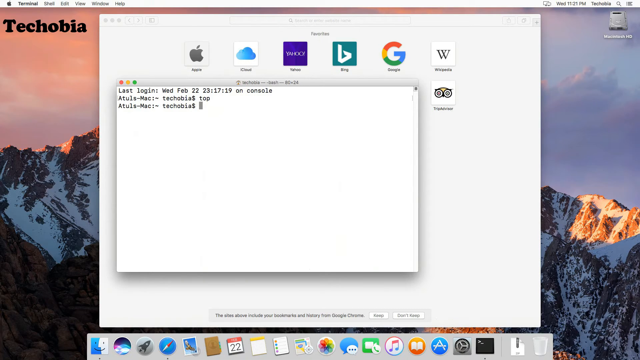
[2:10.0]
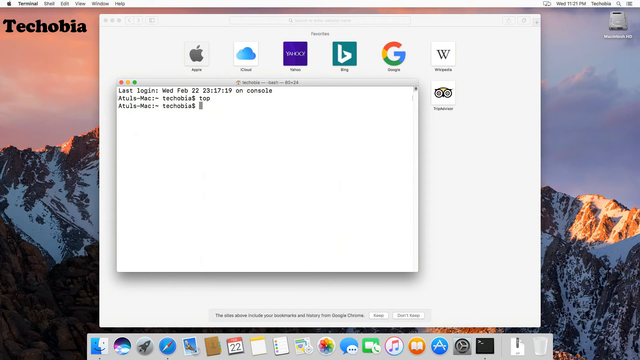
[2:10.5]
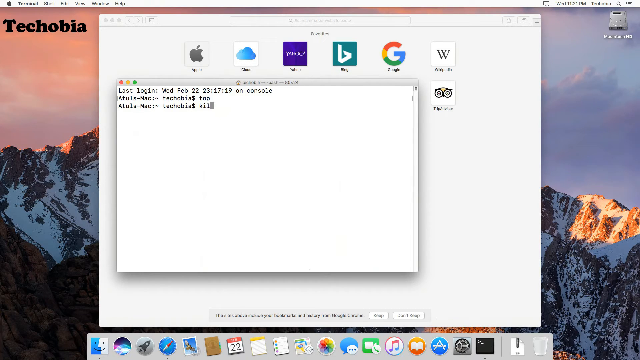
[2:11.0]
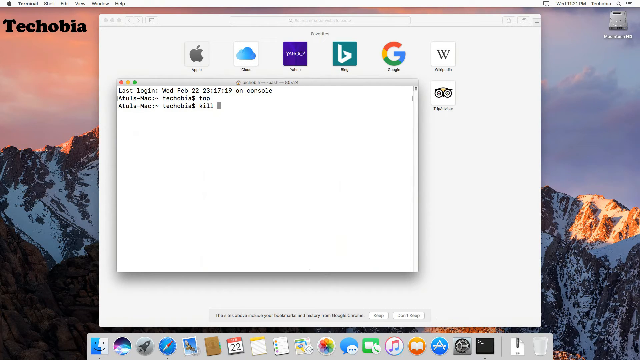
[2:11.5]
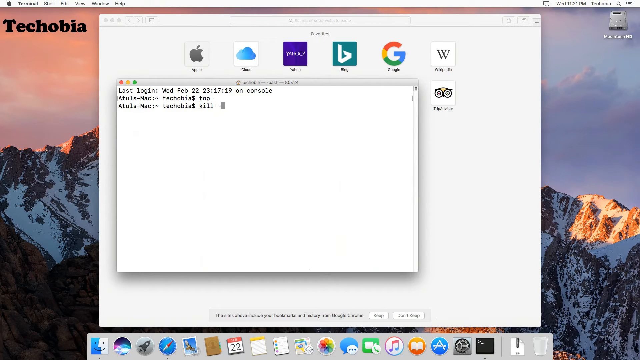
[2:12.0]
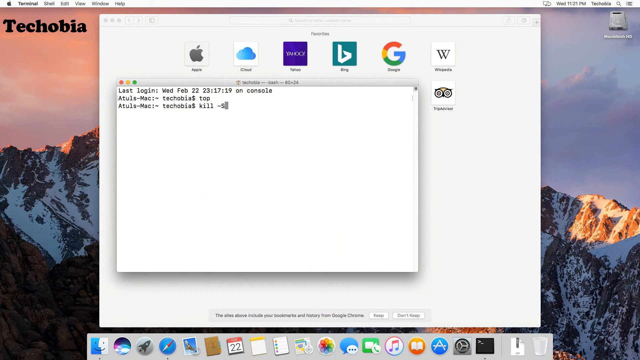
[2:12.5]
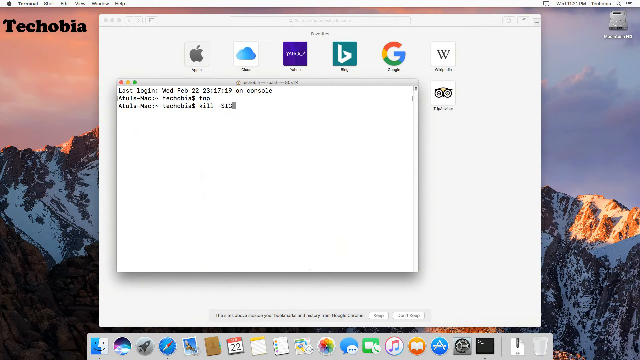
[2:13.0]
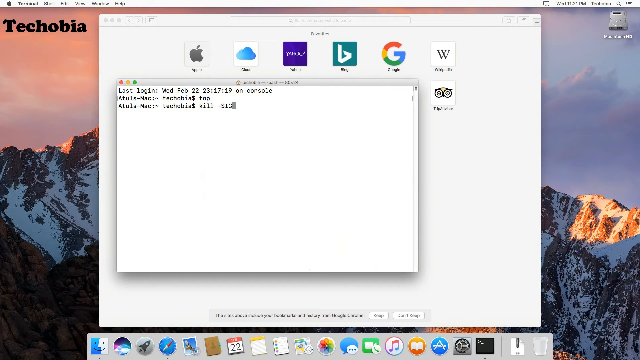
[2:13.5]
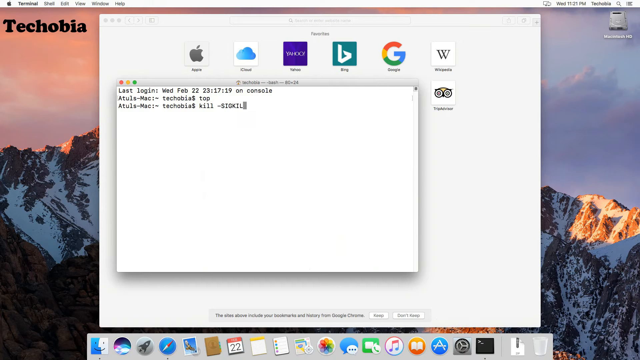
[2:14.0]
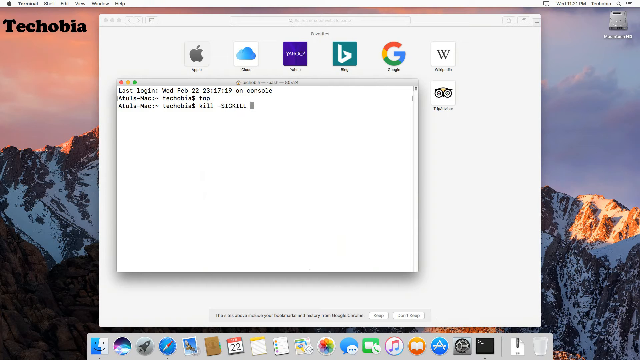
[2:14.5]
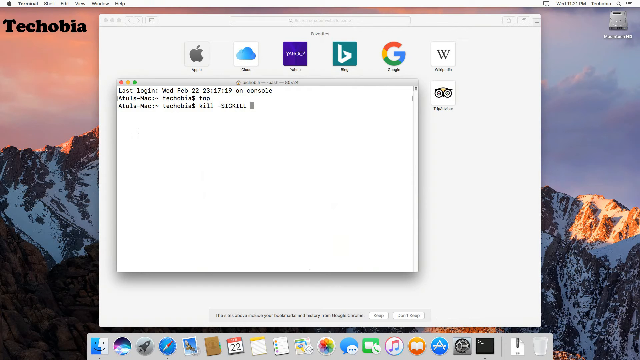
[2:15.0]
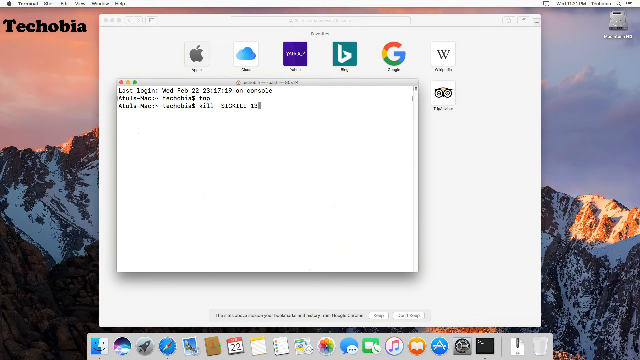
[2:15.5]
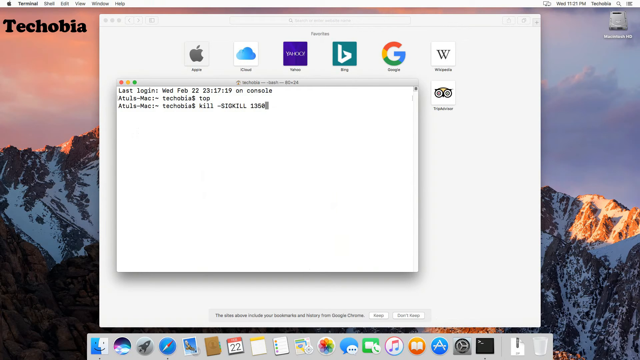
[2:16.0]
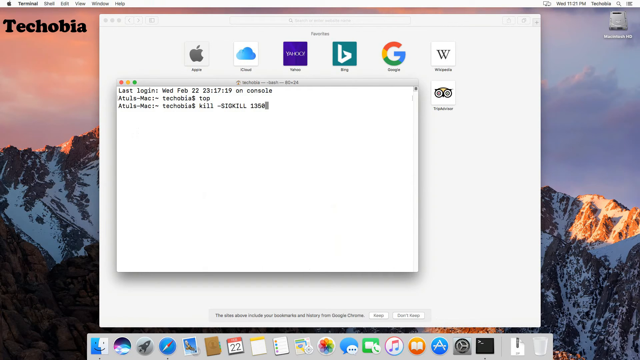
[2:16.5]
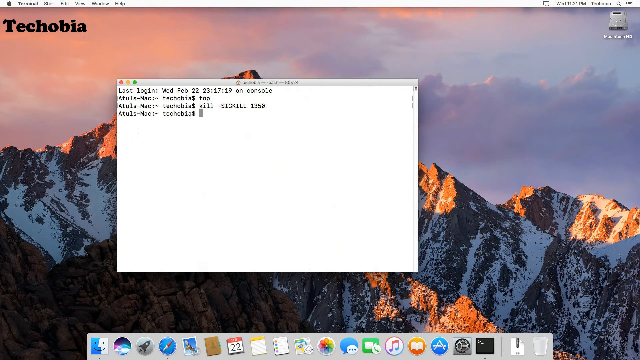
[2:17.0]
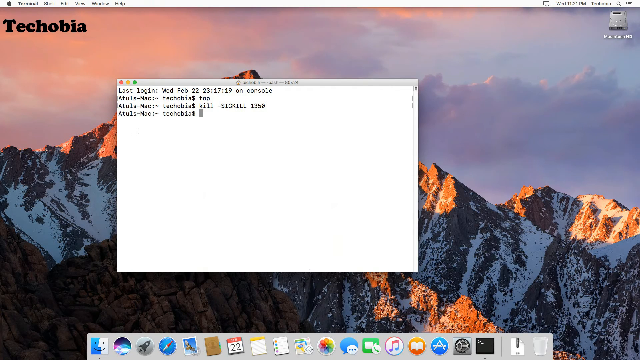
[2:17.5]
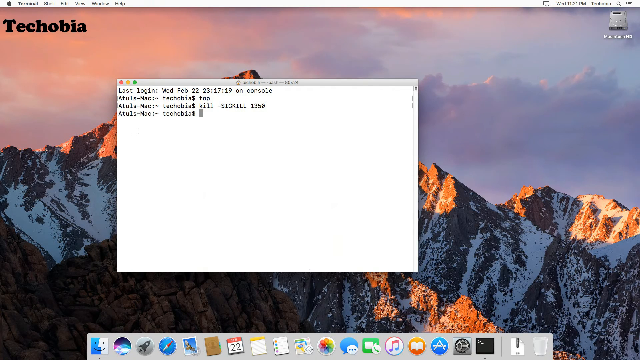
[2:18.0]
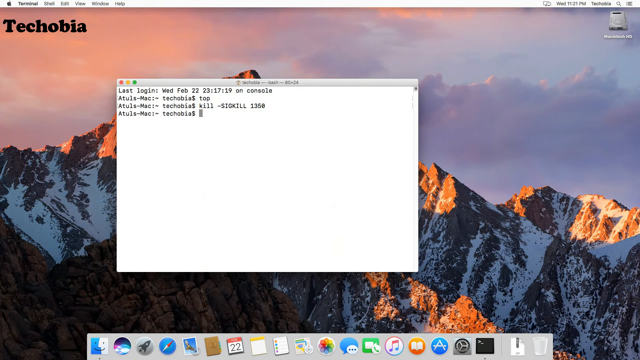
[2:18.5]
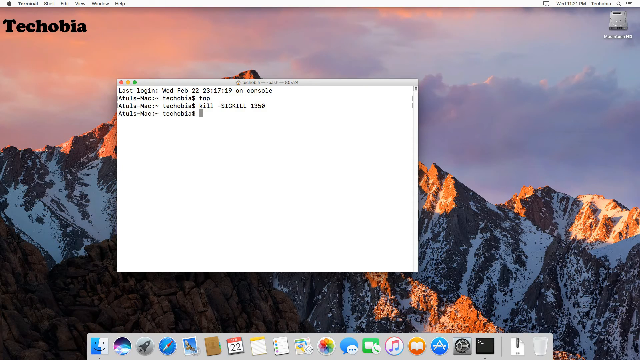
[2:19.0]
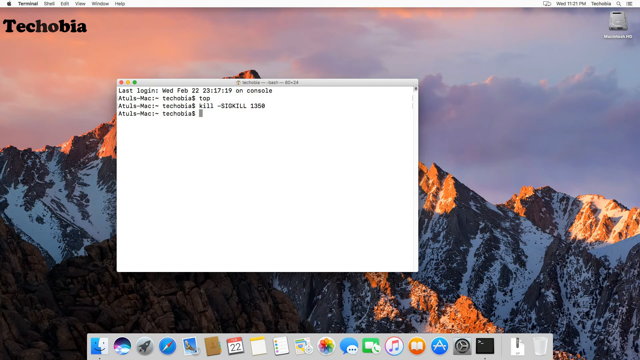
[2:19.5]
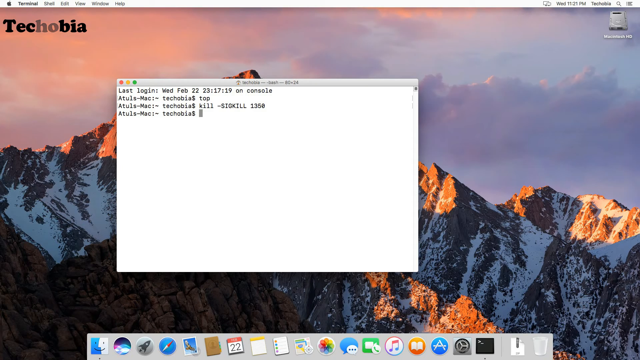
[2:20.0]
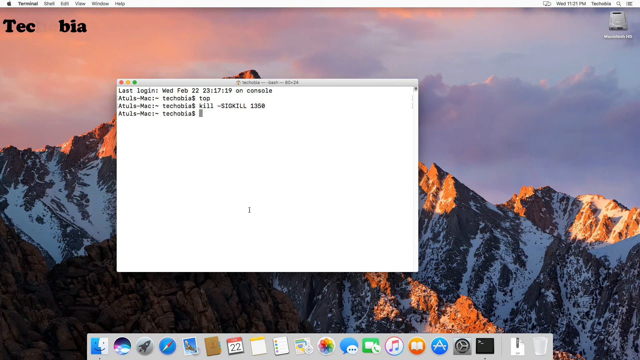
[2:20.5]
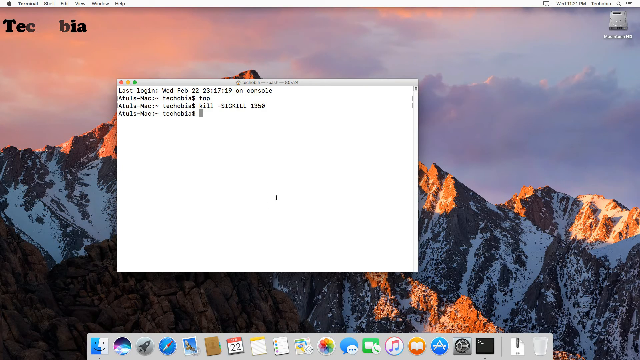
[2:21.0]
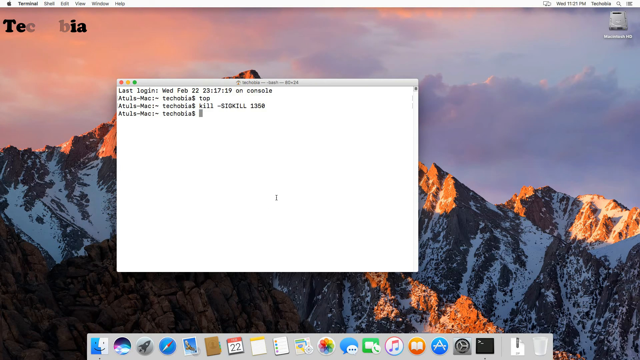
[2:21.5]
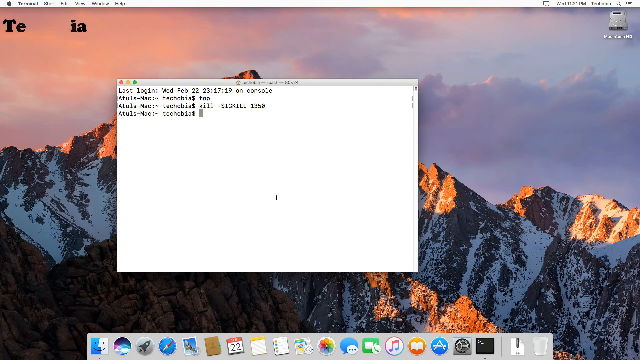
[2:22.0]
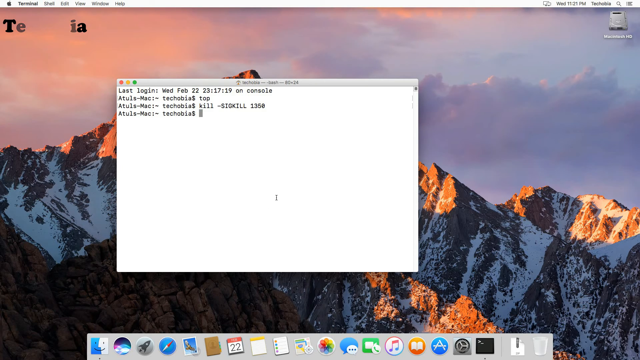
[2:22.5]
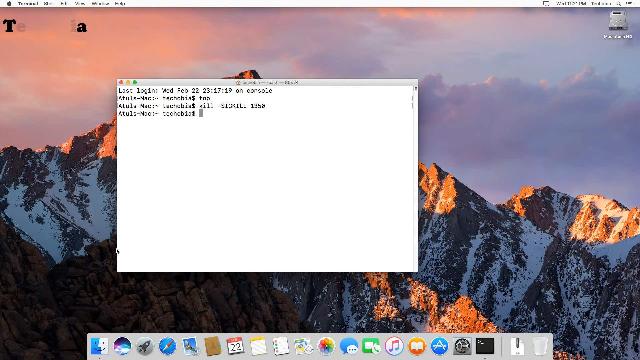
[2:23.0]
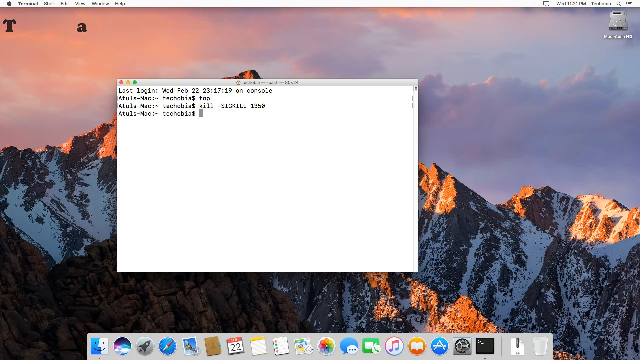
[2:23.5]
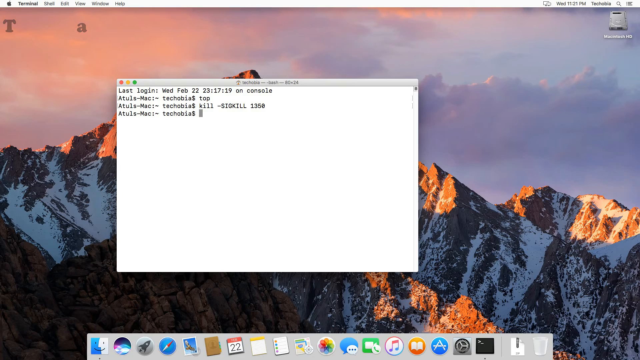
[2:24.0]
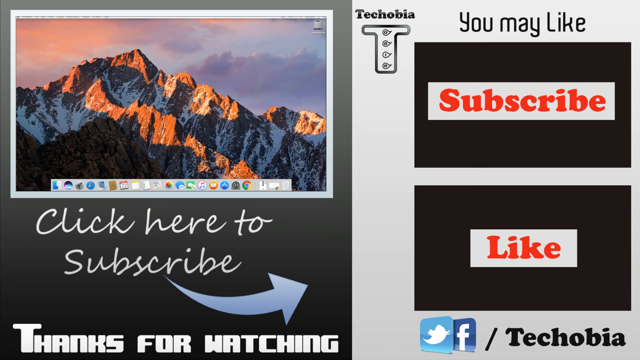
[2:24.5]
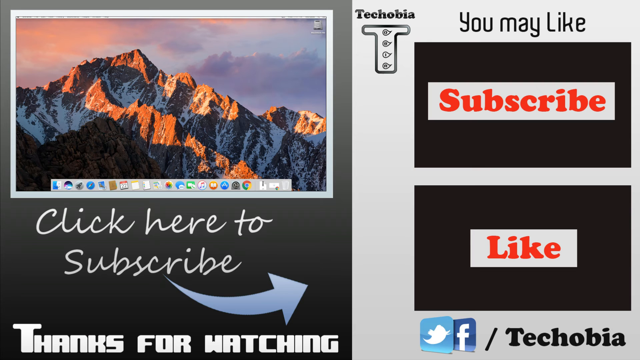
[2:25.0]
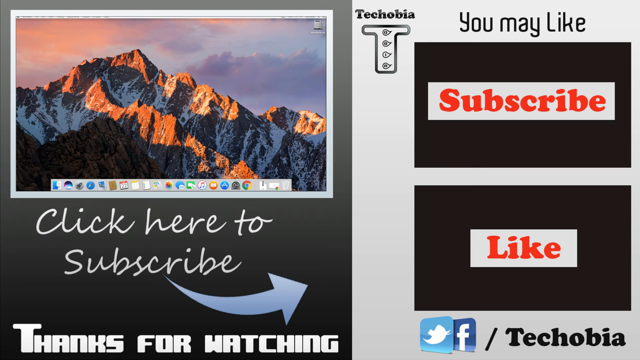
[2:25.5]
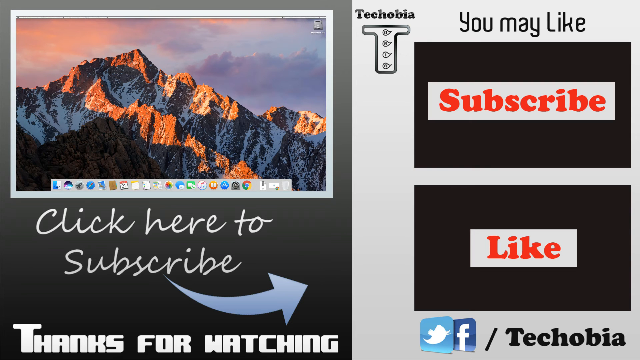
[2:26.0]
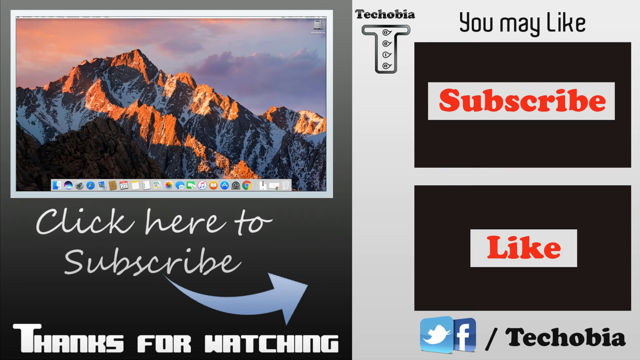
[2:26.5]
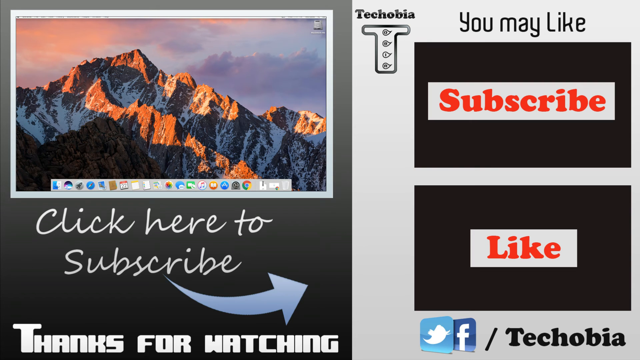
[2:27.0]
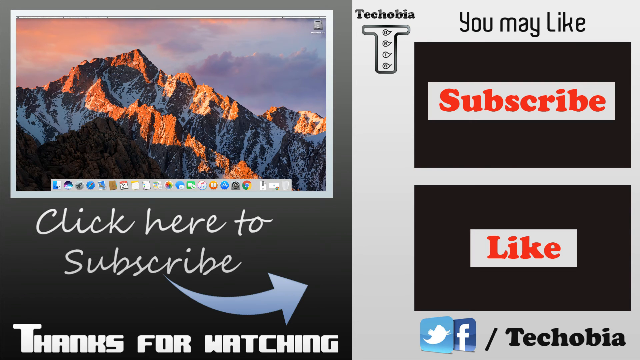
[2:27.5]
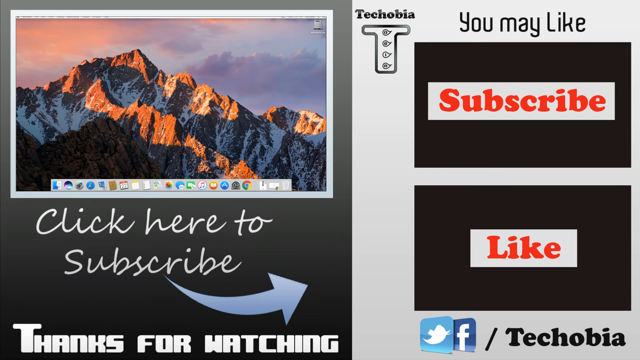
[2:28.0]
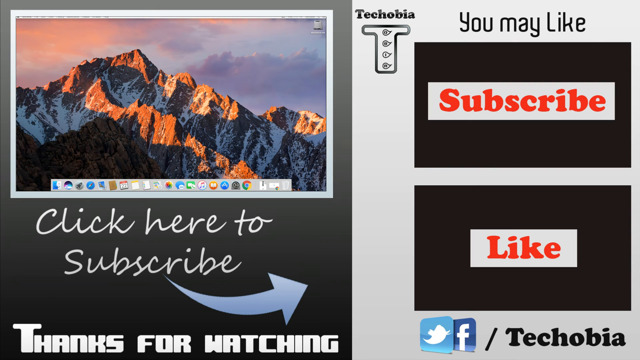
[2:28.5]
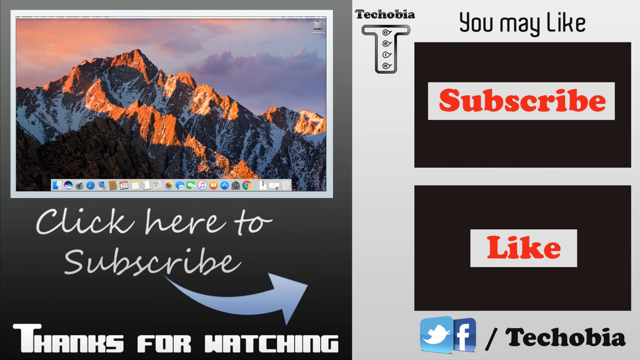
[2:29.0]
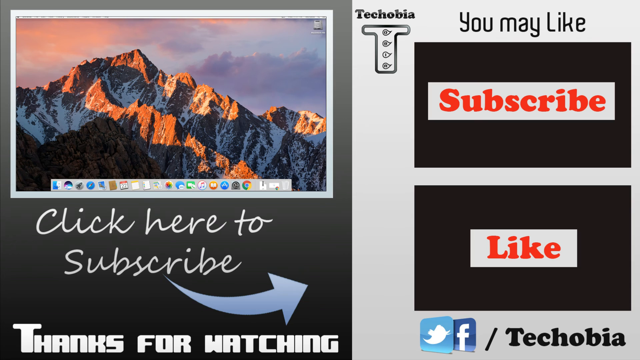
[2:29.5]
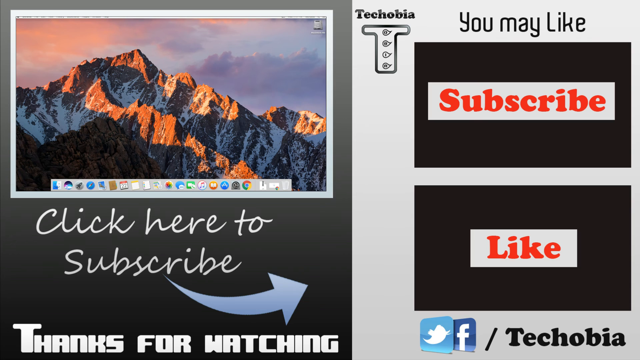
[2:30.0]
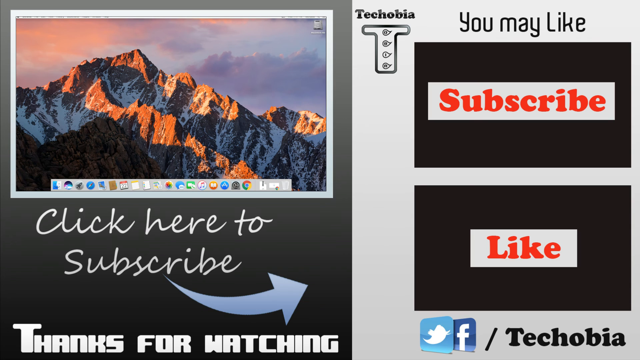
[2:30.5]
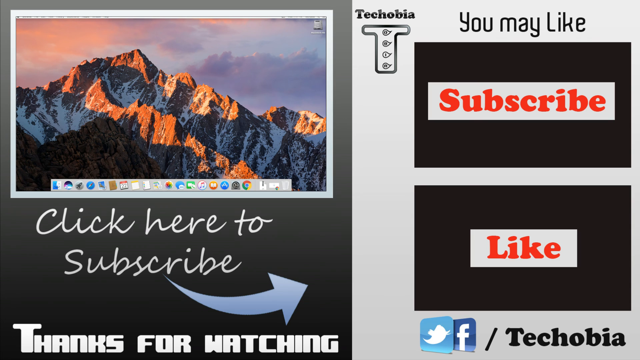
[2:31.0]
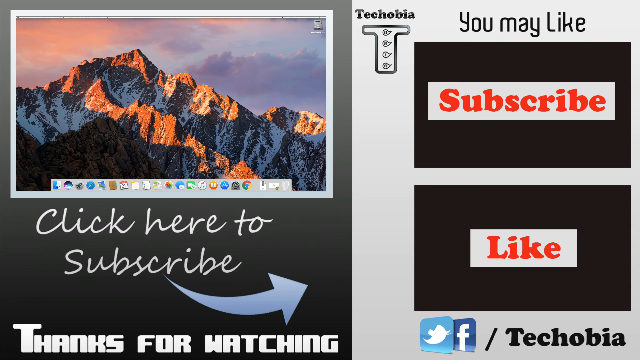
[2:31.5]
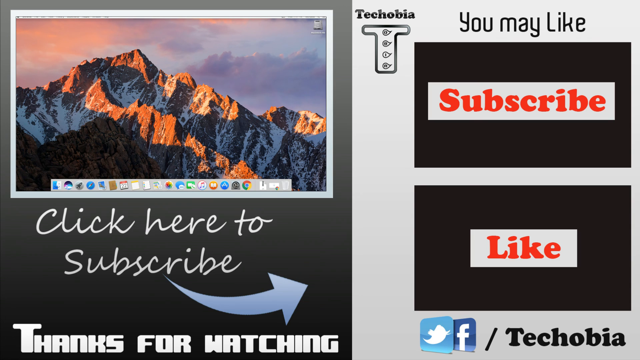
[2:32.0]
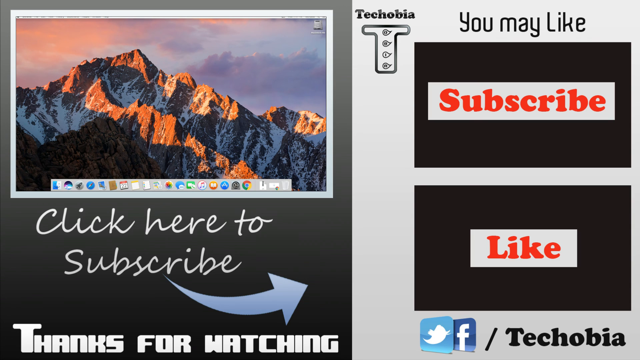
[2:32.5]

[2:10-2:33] The box with the last login information shows "ATULS-MAC" and "Techobia" with a dollar sign, and underneath it the same thing appears again with "Techobia" and a dollar sign. He types the word "KILL," then a dash, then the word "SIGKILL" in all caps, then "1350." Another line appears underneath that says "ATULS-MAC" "Techobia" with a dollar sign, and his cursor moves; he has apparently accomplished what he set out to do. An advertisement to subscribe appears, showing a screenshot of the background of his Mac computer. To the right it says "Techobia" with a T that has four circles in the middle of it, probably a logo. Next to that it says "you may like," and in red letters in a white box inside a black box it says "subscribe," with "like" shown the same way below it.